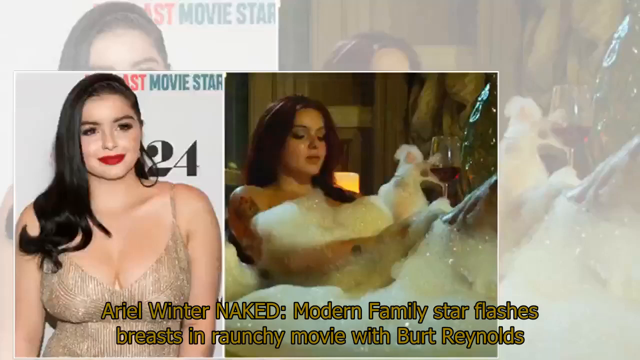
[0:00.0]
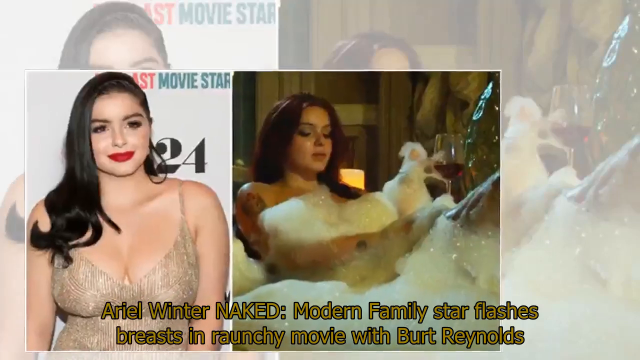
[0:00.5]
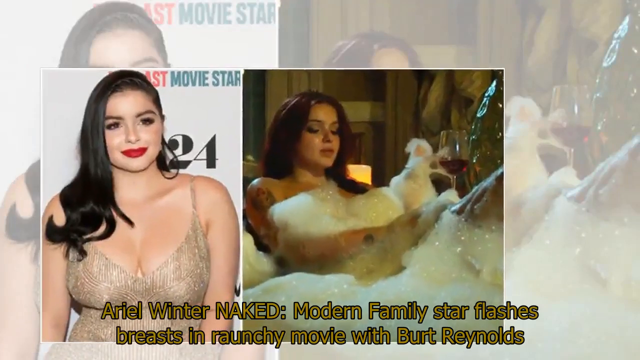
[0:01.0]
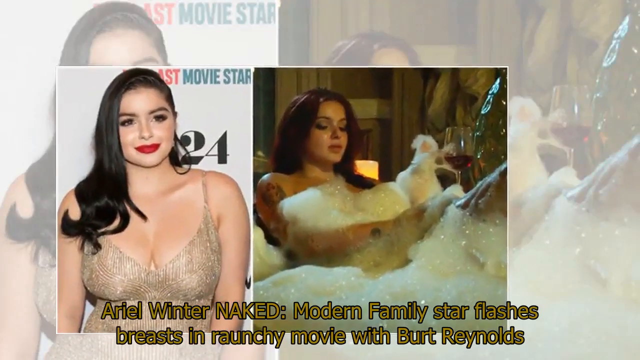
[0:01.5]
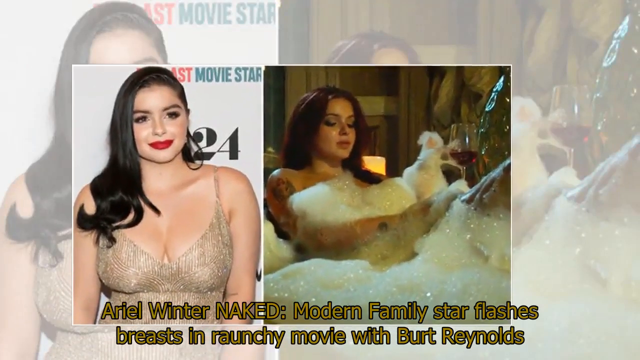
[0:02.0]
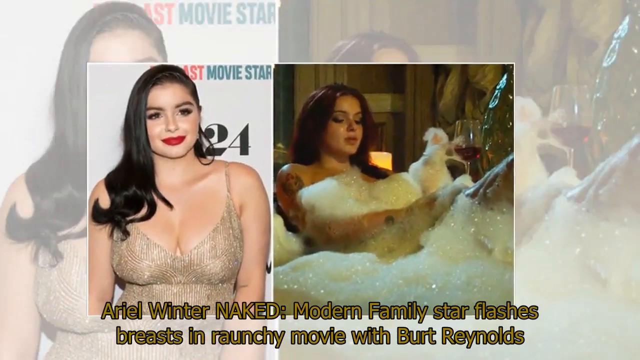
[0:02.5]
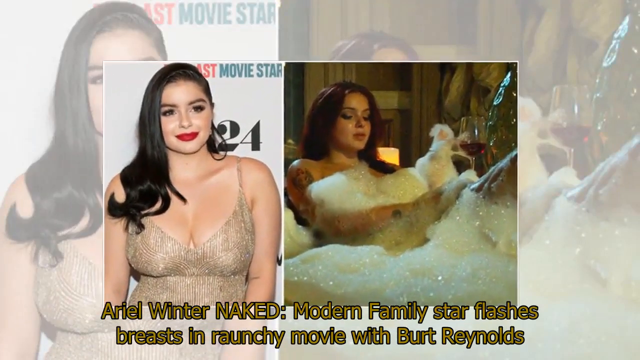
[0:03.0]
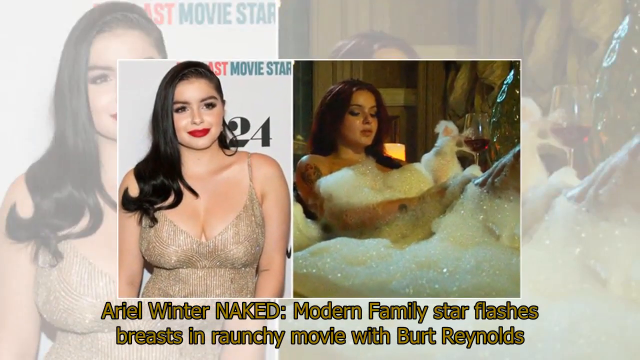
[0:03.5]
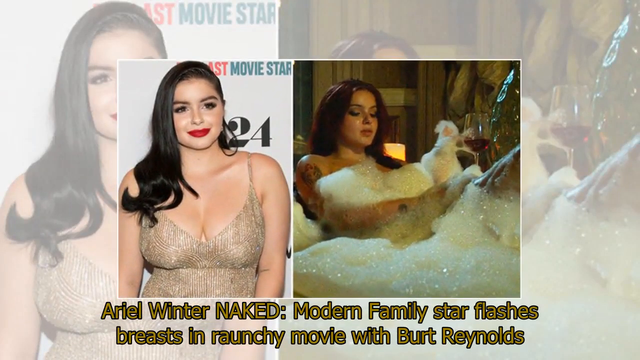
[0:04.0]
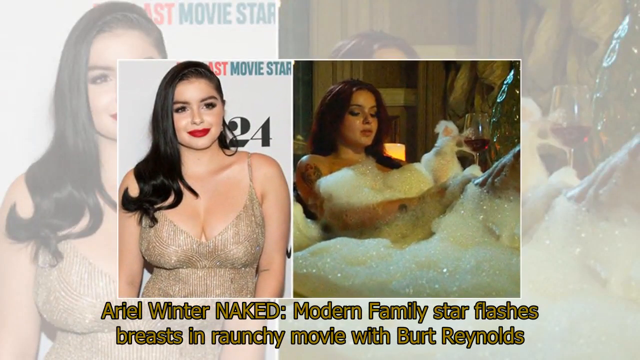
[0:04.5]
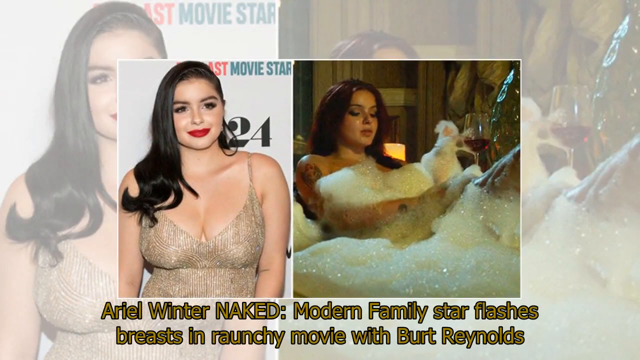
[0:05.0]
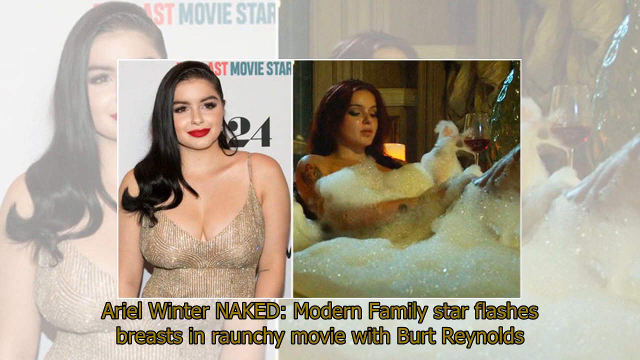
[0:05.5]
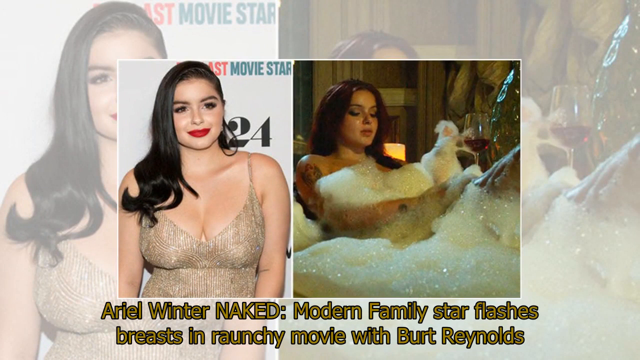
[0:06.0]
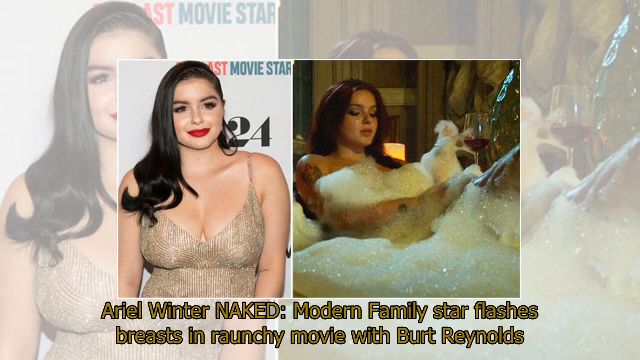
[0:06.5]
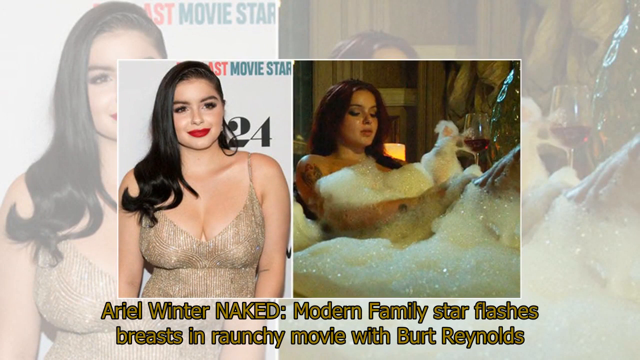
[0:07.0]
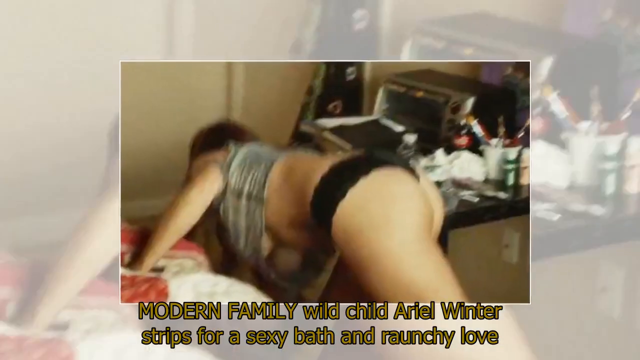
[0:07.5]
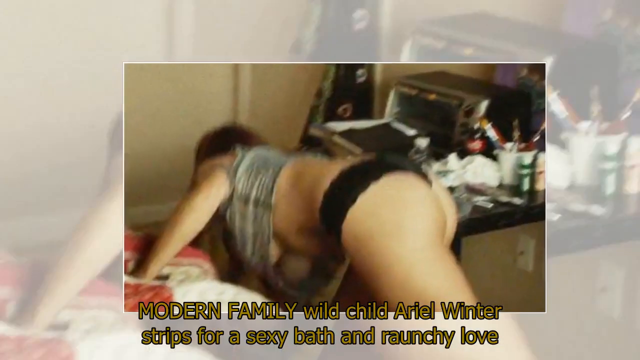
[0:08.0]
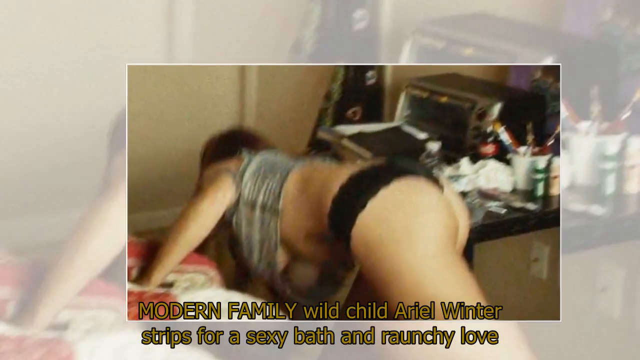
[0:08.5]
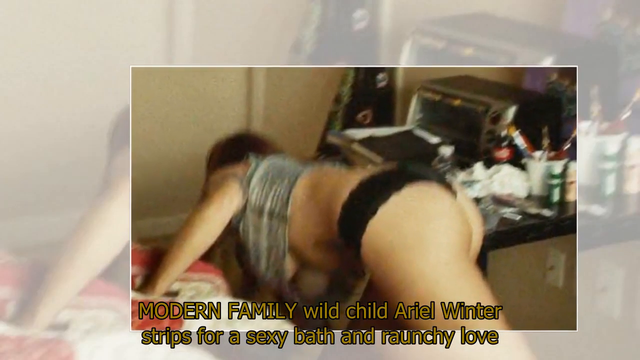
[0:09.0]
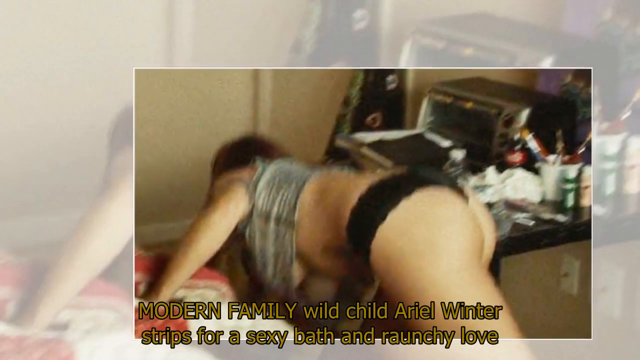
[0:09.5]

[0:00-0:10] The video opens with an introduction about Ariel Winter, the Modern Family star, in a movie with Burt Reynolds. A photo shows a woman wearing makeup, red lipstick and a goldish dress. She is also seen in a bathtub with a puff of soap, holding a glass of wine. Another photo shows her in black panties and a small top, her breasts visible as she bends down inside a busy room with some stuff on the table, apparently looking for something. The photo is identified as Modern Family's Ariel Winter in a bath scene.